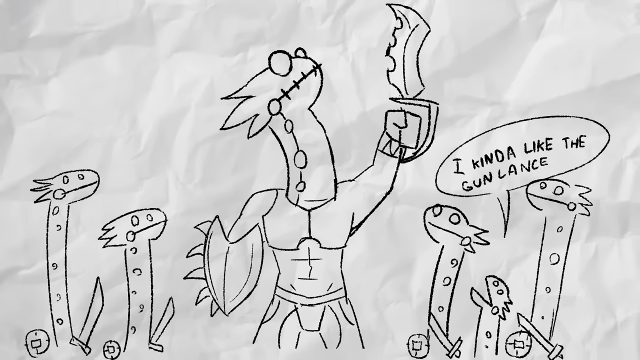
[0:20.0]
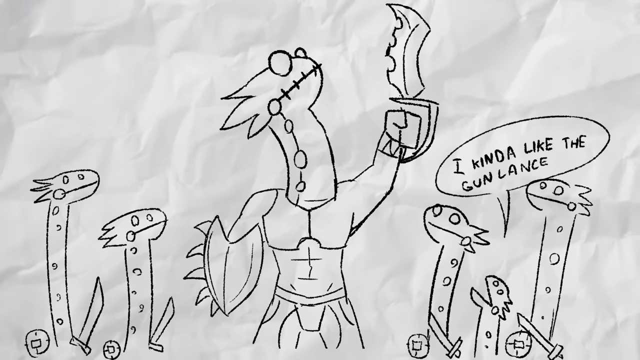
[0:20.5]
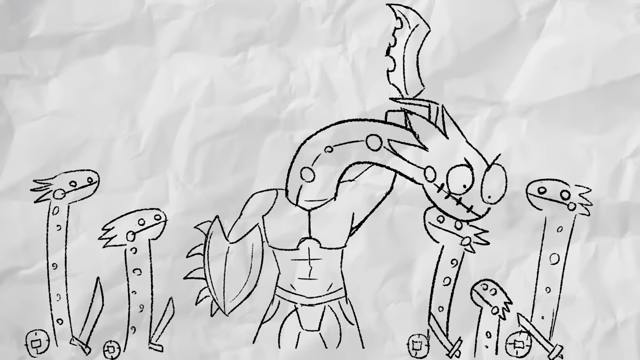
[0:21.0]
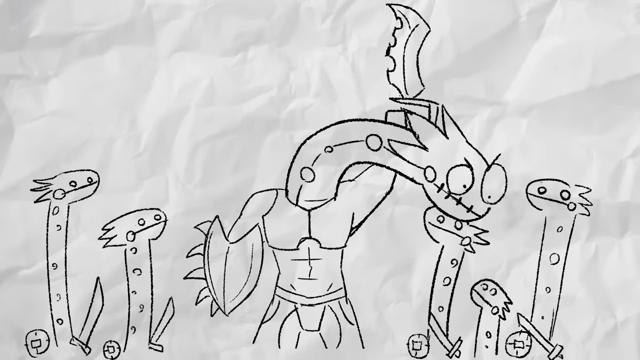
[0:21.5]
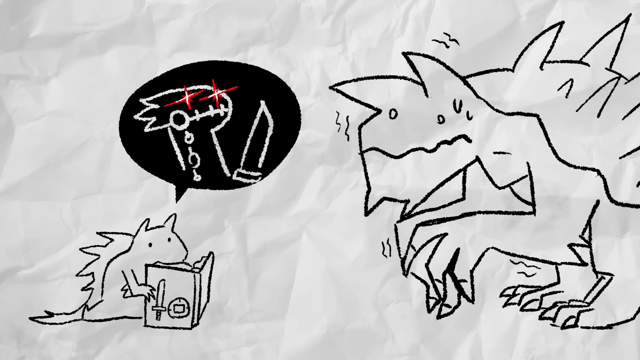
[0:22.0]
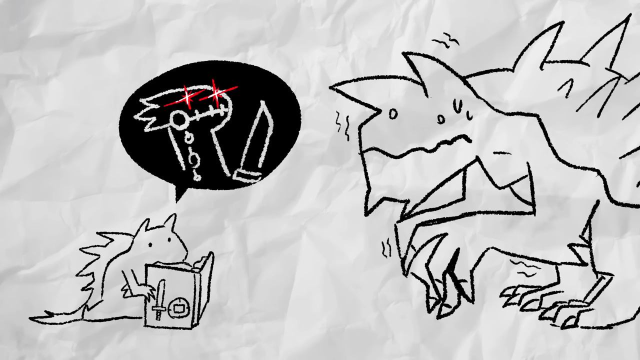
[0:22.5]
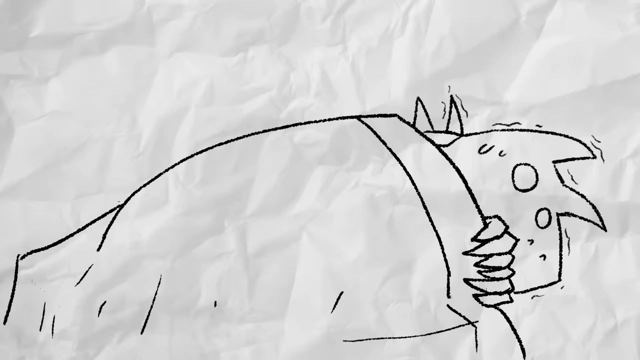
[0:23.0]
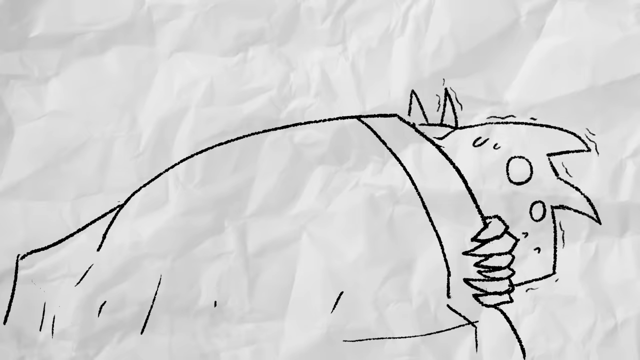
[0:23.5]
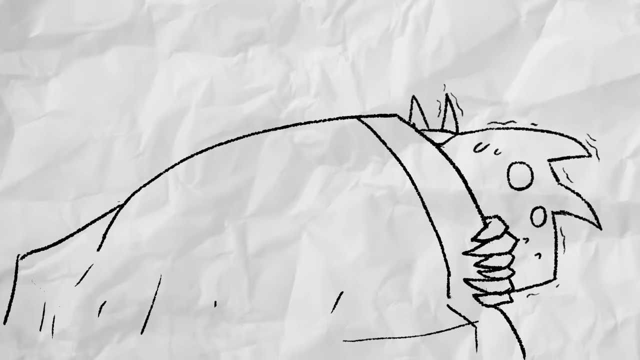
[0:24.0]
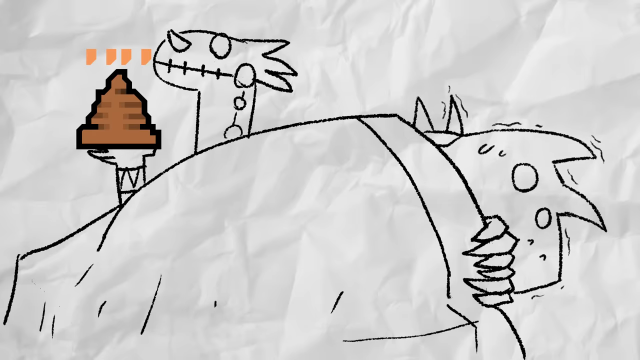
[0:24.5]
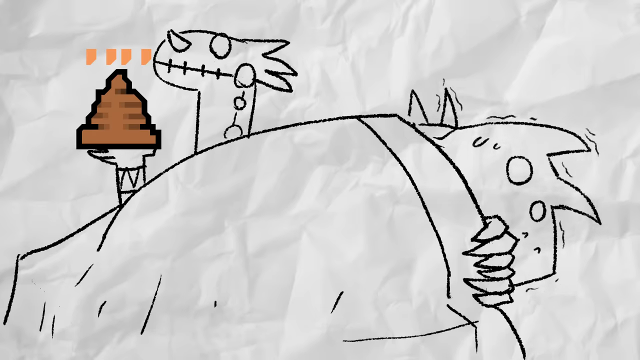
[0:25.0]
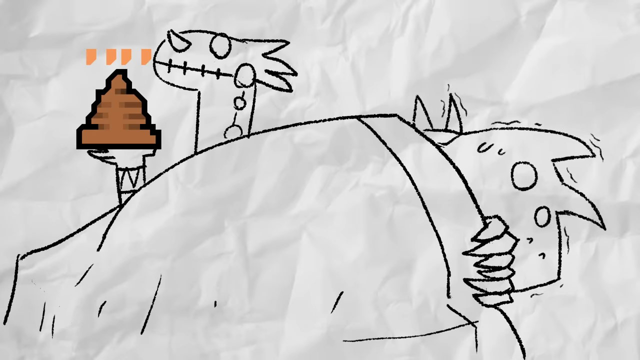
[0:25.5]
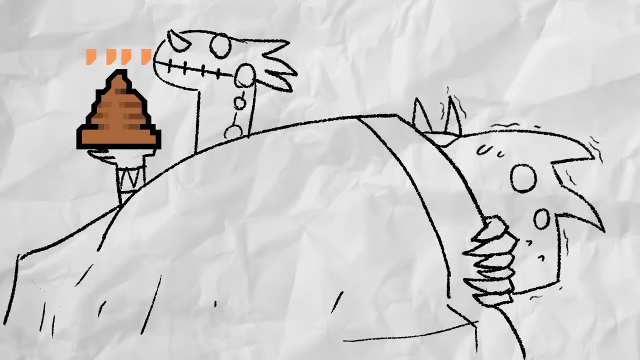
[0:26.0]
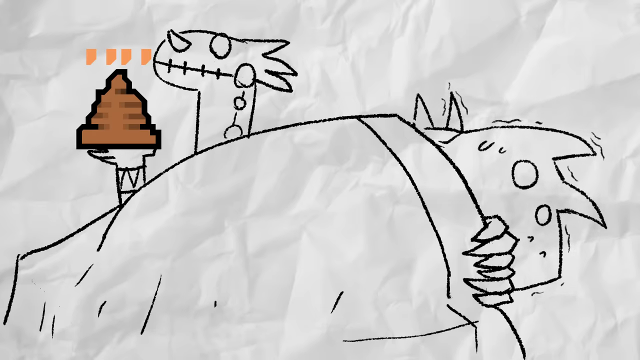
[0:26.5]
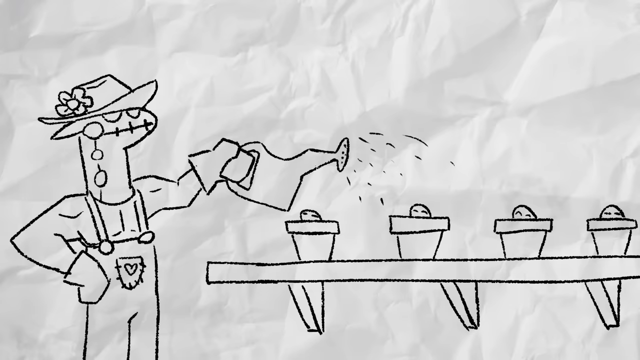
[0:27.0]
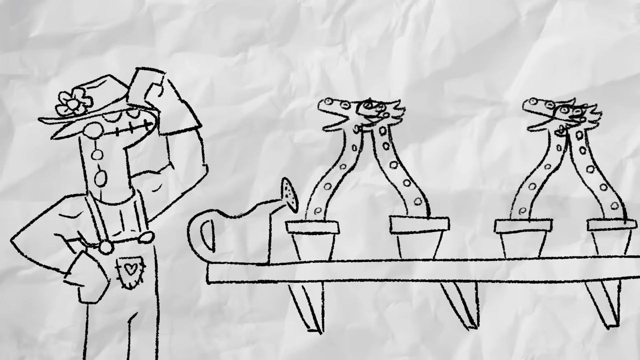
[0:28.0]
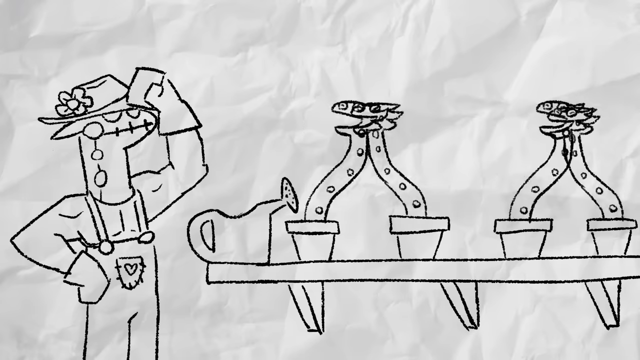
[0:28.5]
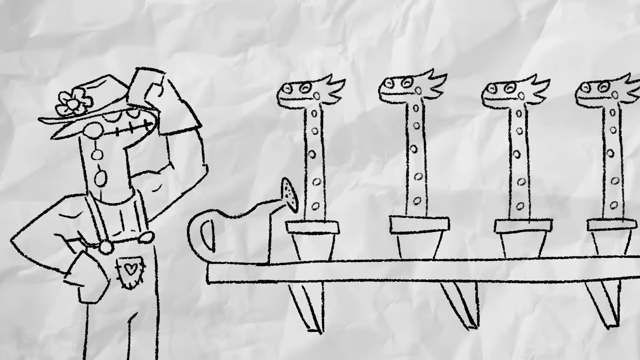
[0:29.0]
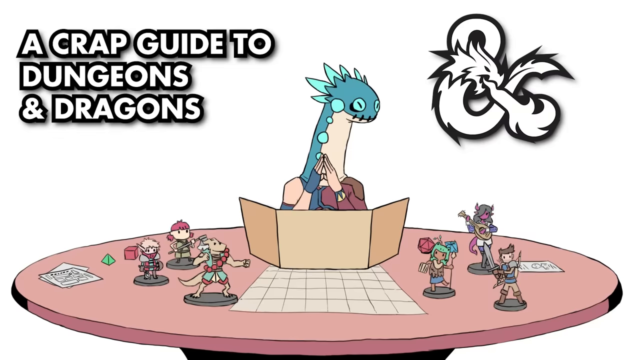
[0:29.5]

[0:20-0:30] On a white crumpled paper background are black drawings: what looks like four or five giraffes with little circles on them, which all maybe sort of look like dinosaurs too, and sort of the same character in the center holding up a blade and looking up at the sky. A quote bubble over some of the characters says "I kind of like the gunlance." He quickly moves down to the guy in the center and appears to bite something. The scene transitions to a big dinosaur-looking creature and a smaller one holding a book, with a black and white bubble above that character containing red, white and black X's. A person hides under the covers, shaking, while a character in the background has a pile of poop. A character waters plants, and all of the plants jump up and begin to dance. Then come drawings in color with text that says "a crap guide to dungeons and dragons", and a bunch of knickknacks or action figures on a table.